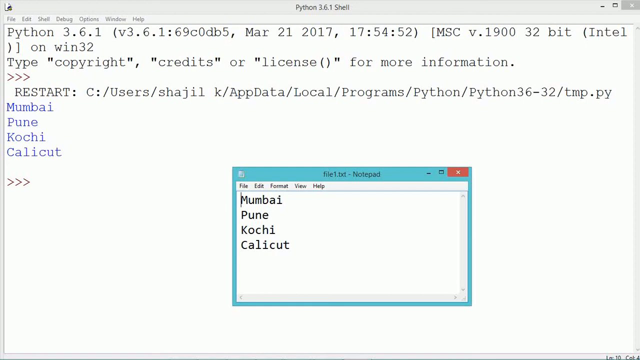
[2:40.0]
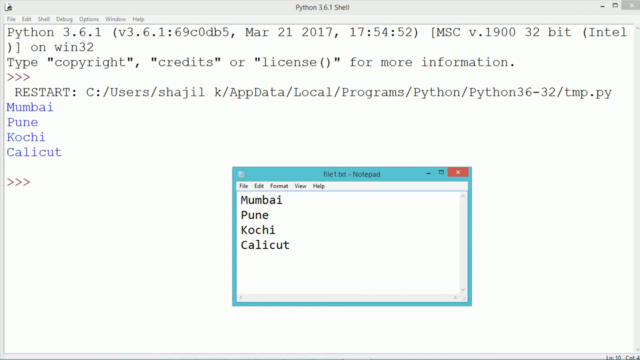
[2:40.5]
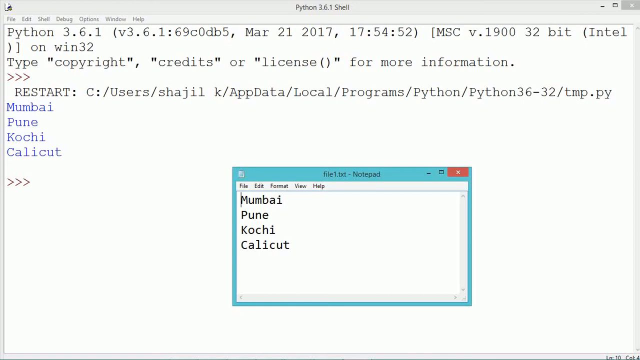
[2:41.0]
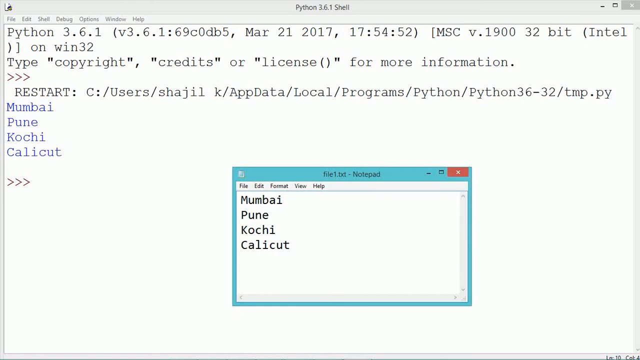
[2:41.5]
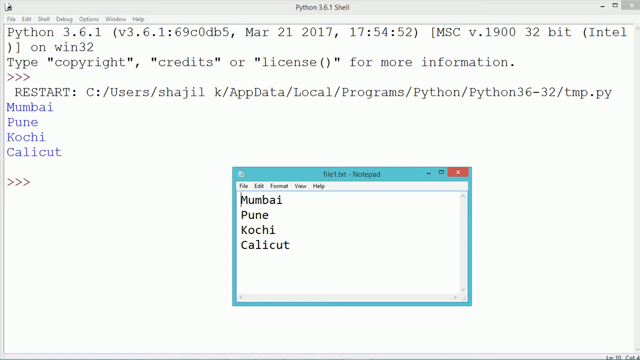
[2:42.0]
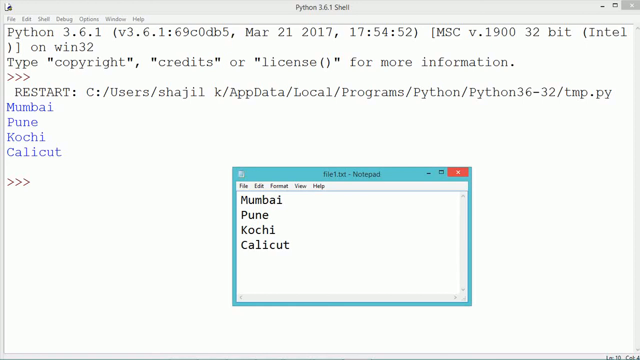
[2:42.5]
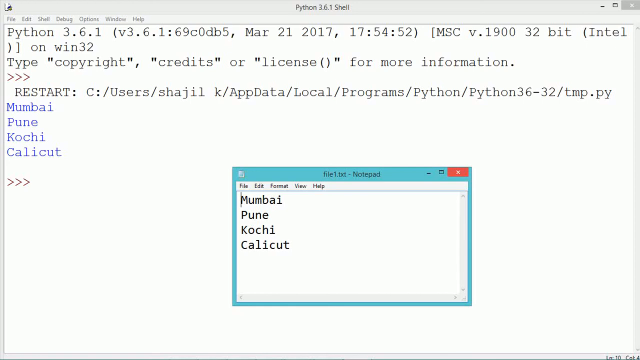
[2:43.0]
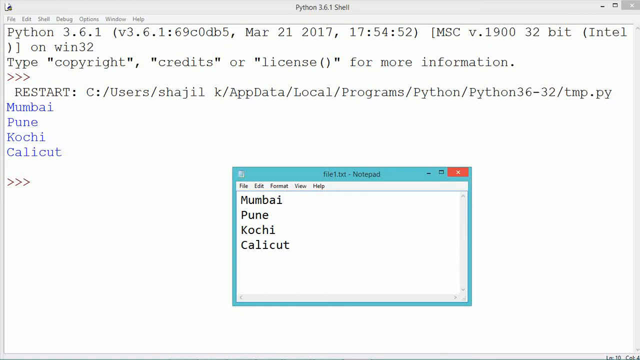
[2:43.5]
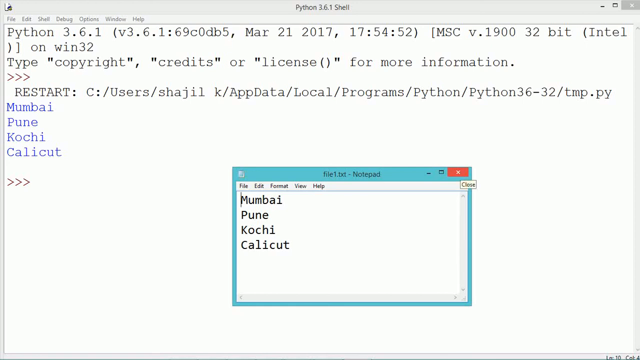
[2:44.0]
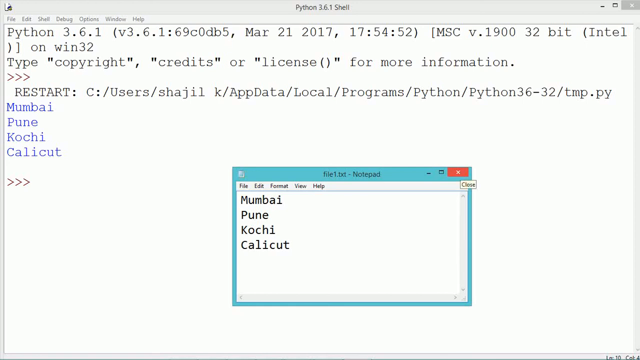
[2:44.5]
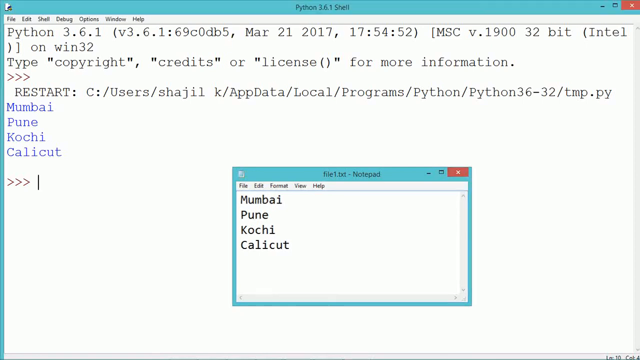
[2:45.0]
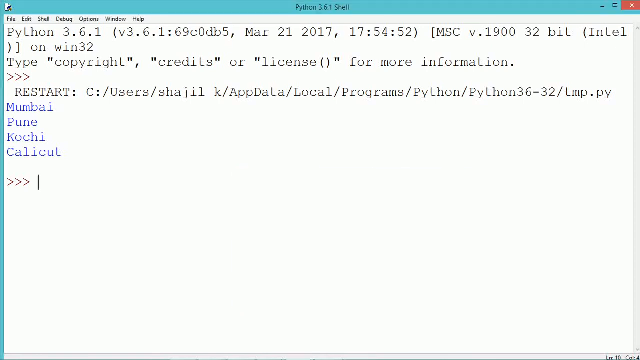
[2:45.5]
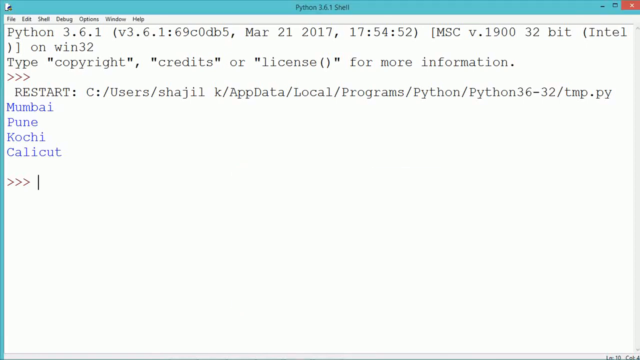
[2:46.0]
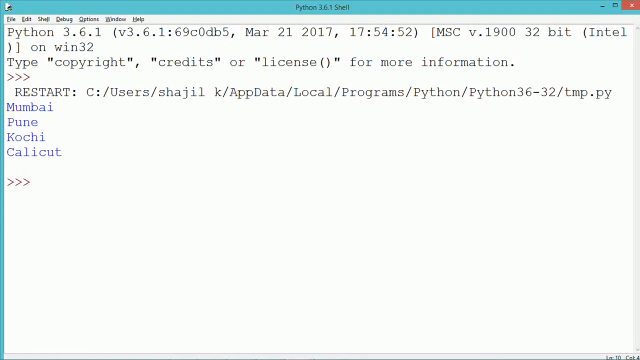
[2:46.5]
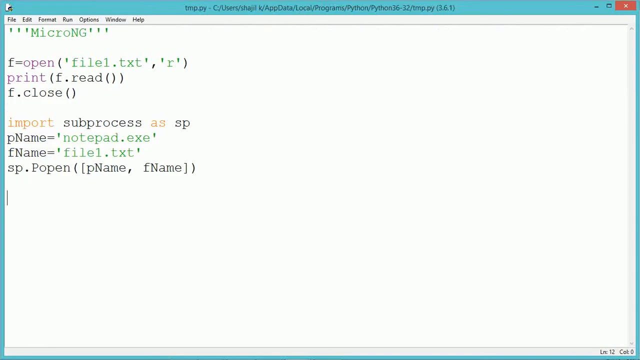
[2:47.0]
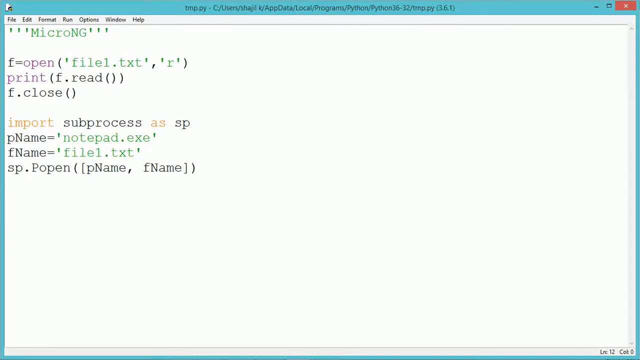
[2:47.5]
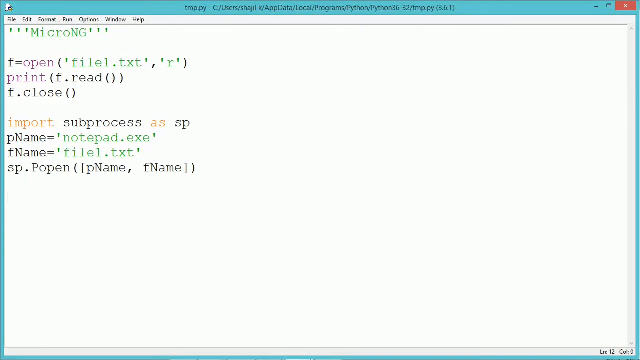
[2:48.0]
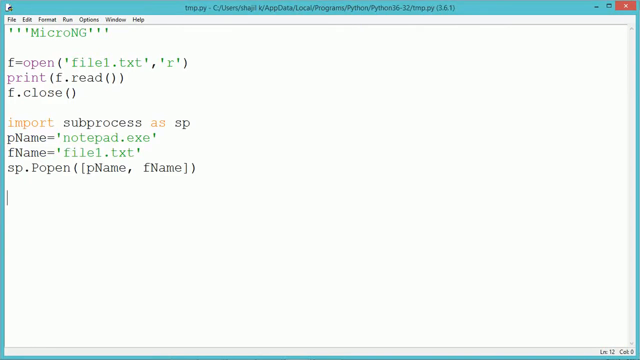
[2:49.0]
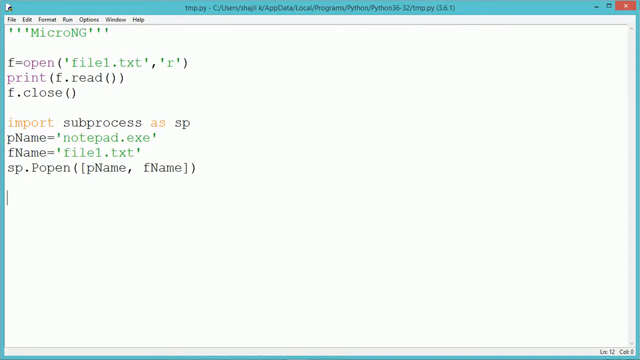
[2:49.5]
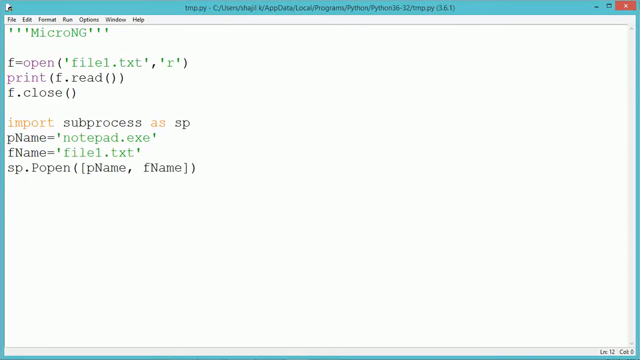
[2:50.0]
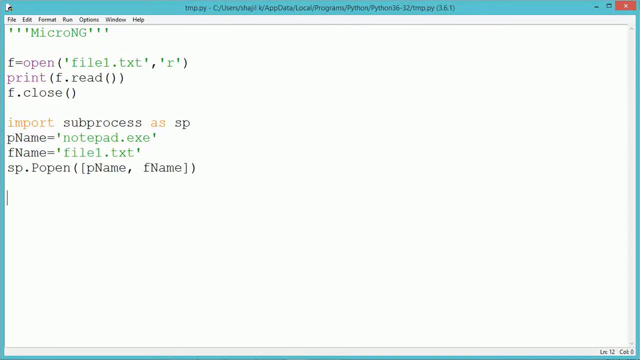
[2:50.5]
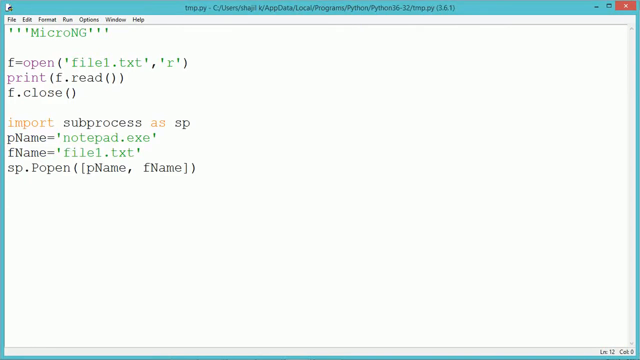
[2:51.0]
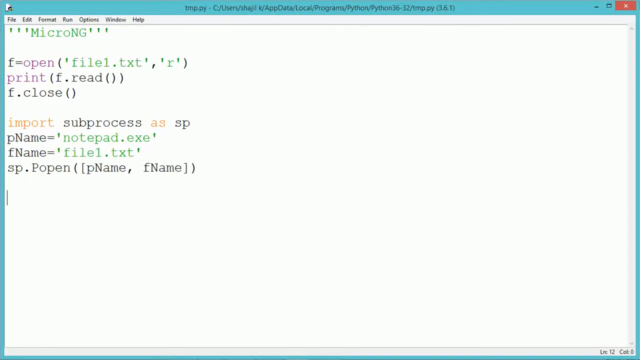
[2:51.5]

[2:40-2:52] The code runs with apparently no errors. After the run command, the Python shell shows text beginning "type copyright credits", and below the copyright text it says "restart". The file directory of the Python program is shown, and then the names typed in Notepad suddenly appear in the program's output, extracted from the file.